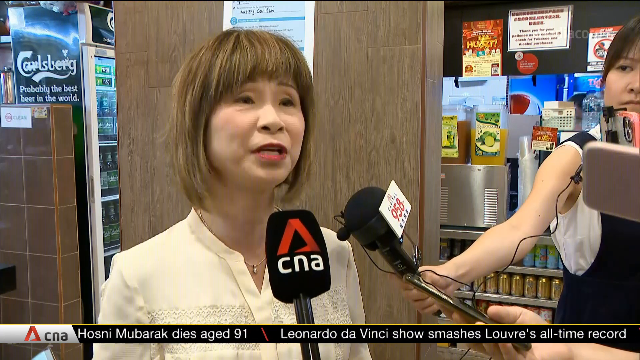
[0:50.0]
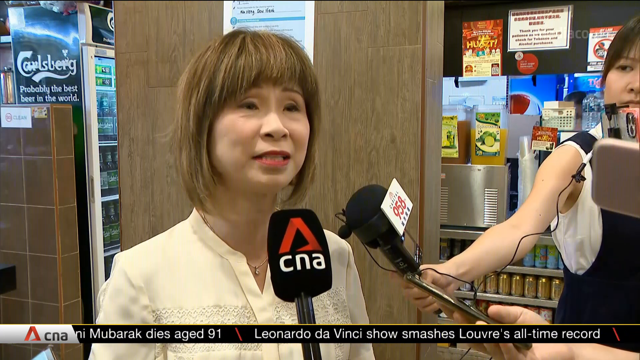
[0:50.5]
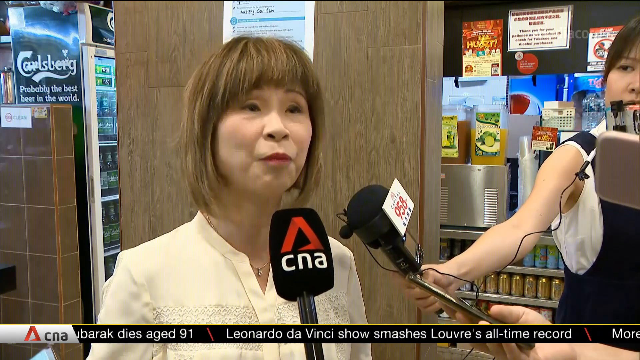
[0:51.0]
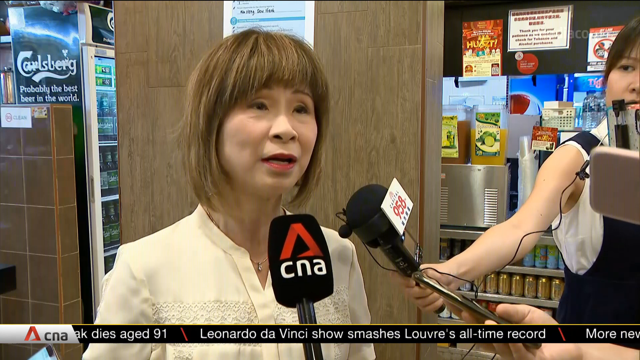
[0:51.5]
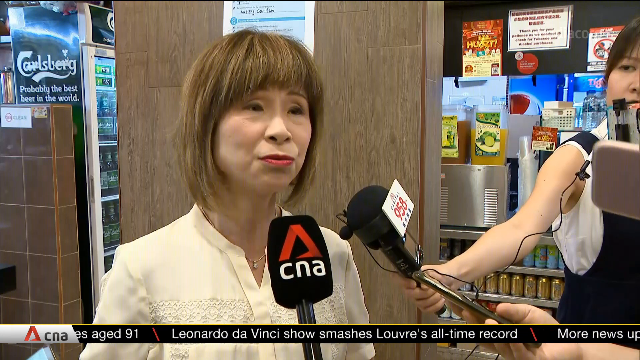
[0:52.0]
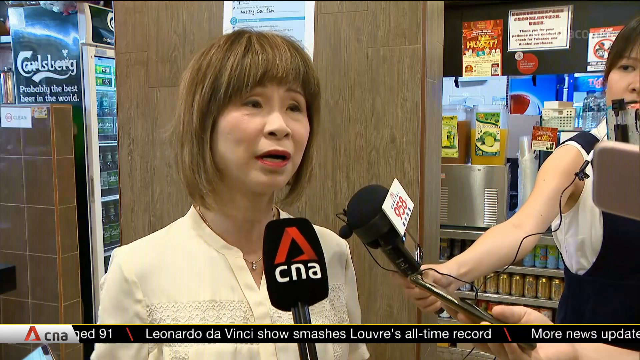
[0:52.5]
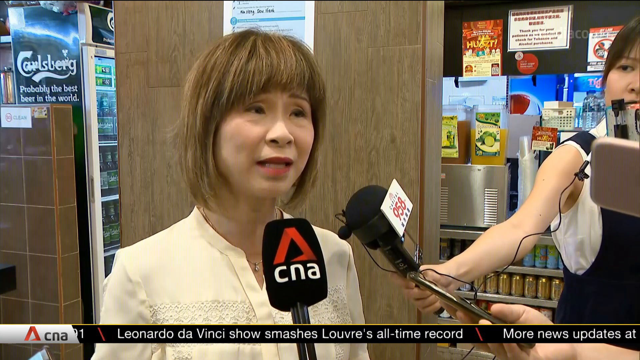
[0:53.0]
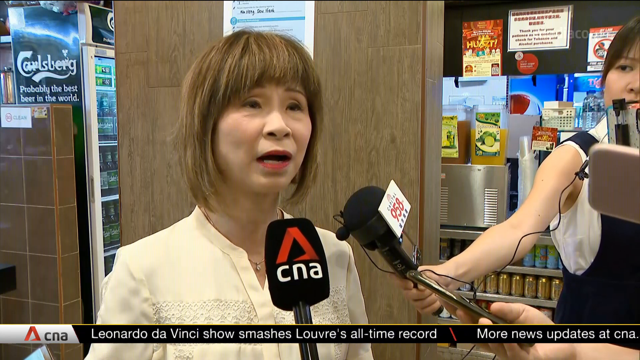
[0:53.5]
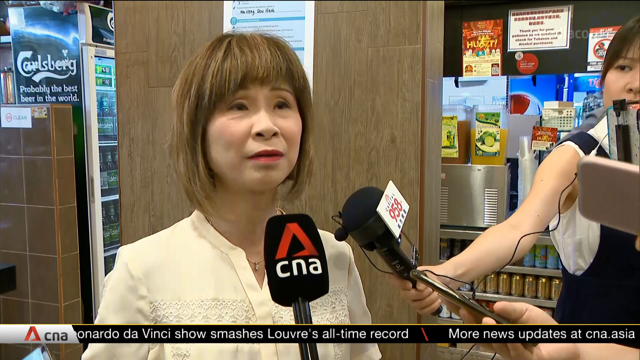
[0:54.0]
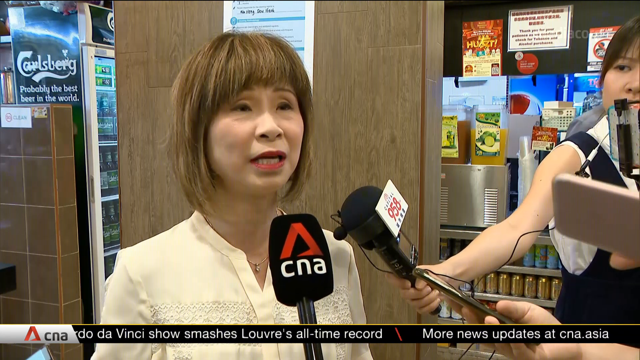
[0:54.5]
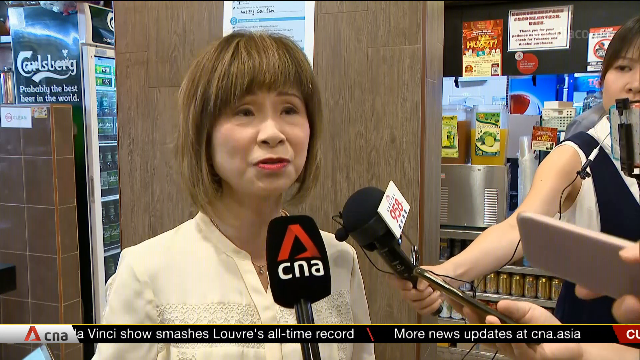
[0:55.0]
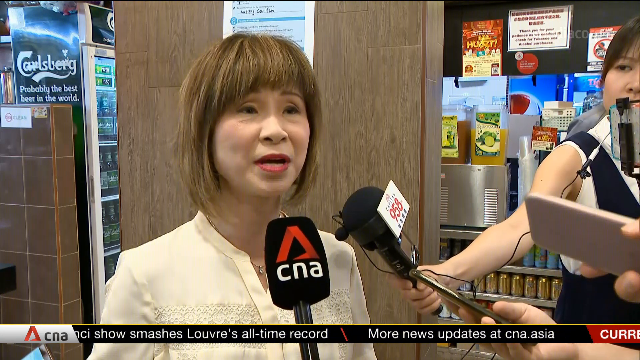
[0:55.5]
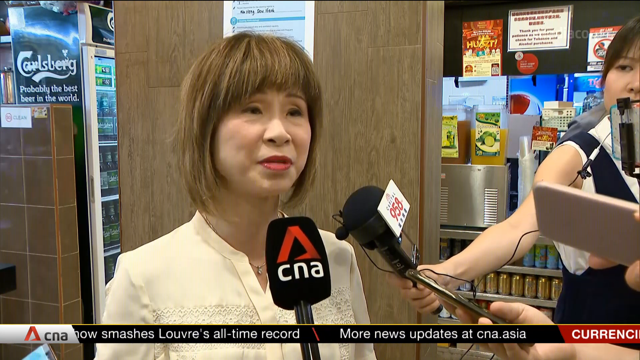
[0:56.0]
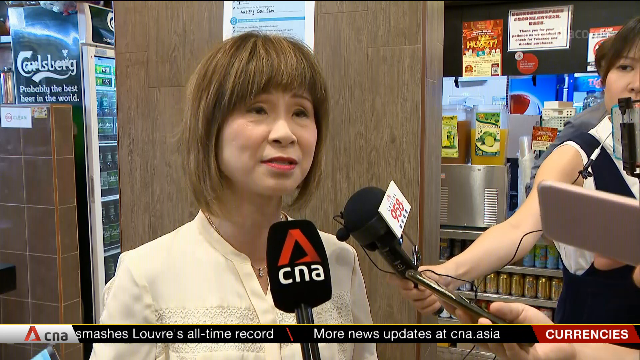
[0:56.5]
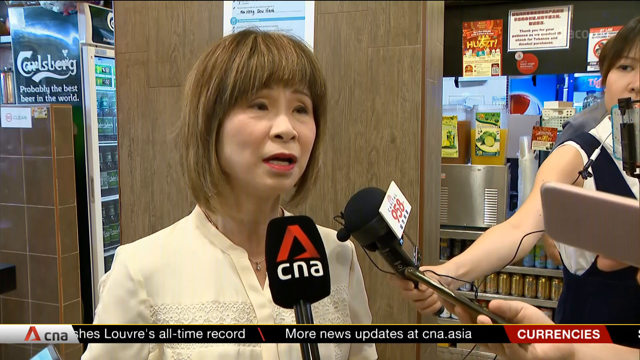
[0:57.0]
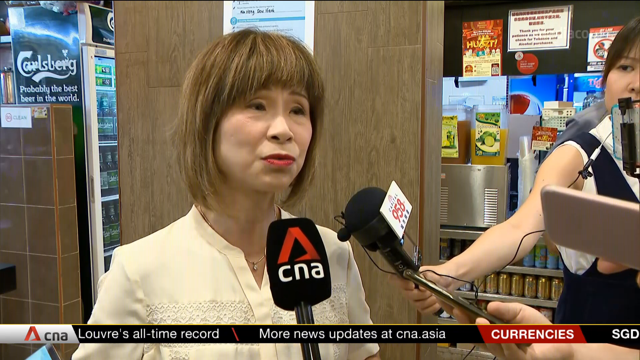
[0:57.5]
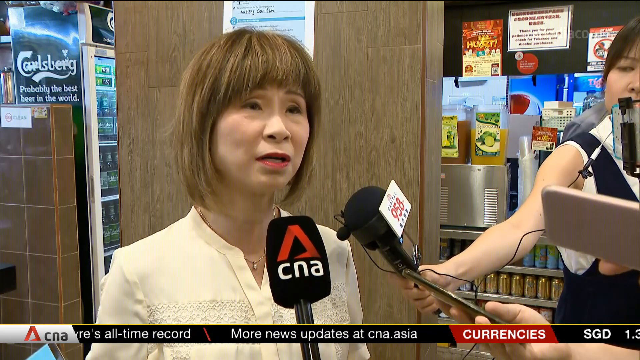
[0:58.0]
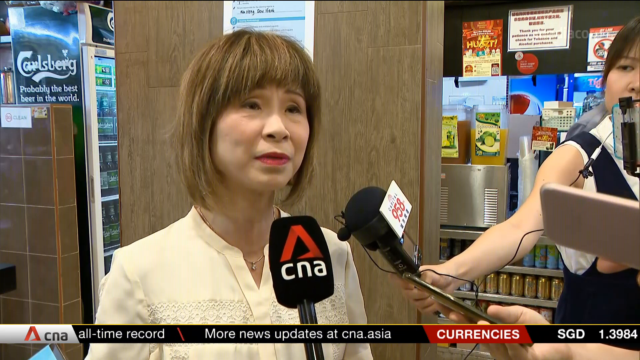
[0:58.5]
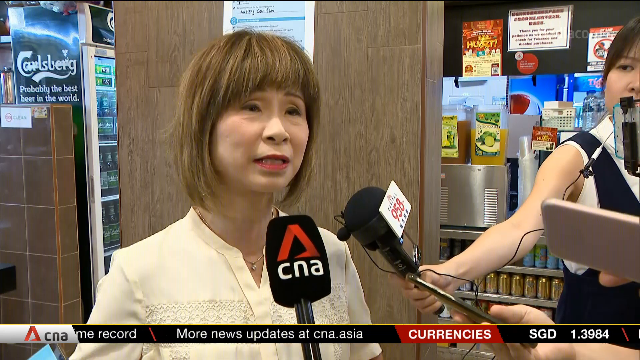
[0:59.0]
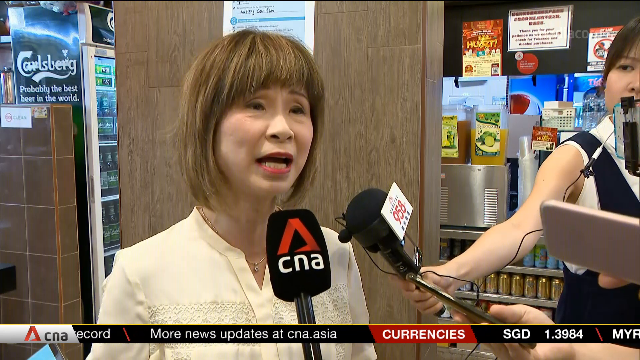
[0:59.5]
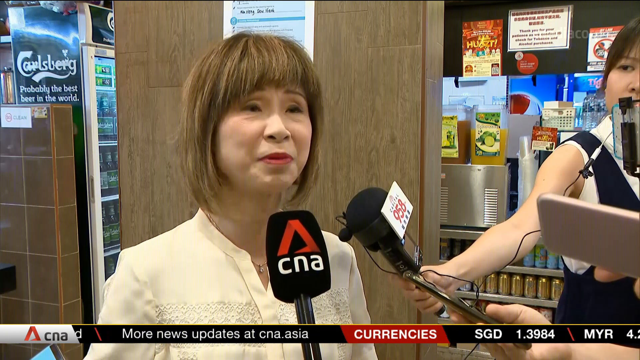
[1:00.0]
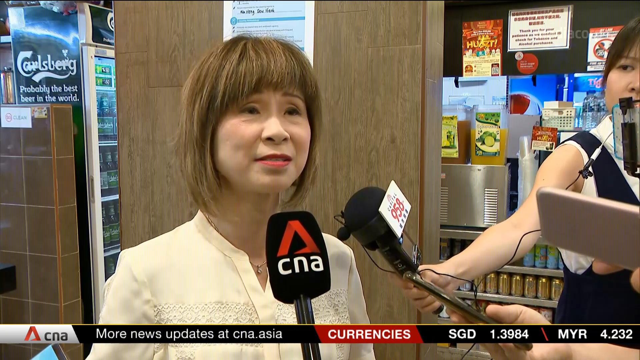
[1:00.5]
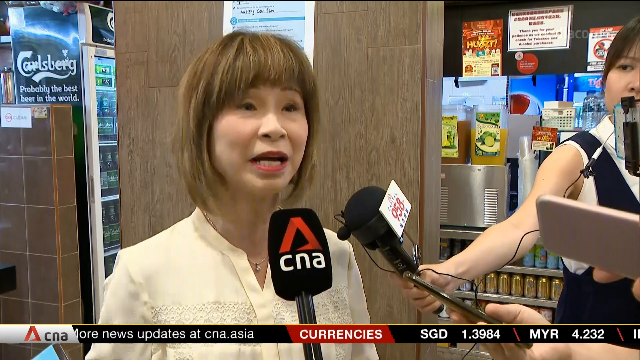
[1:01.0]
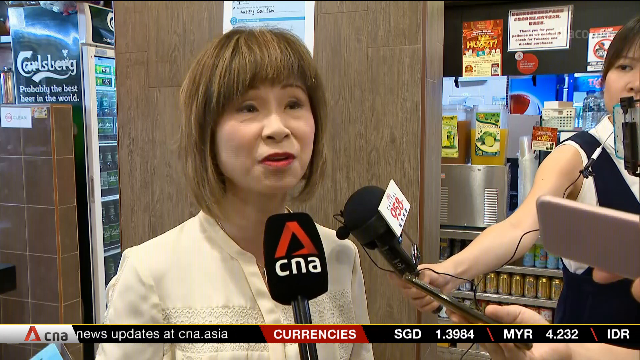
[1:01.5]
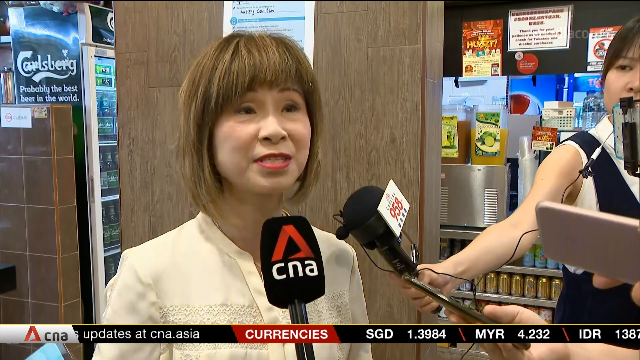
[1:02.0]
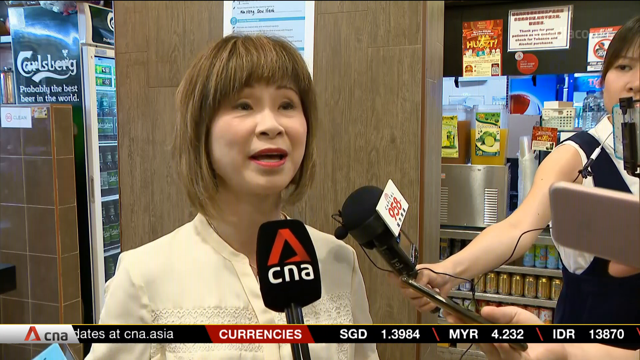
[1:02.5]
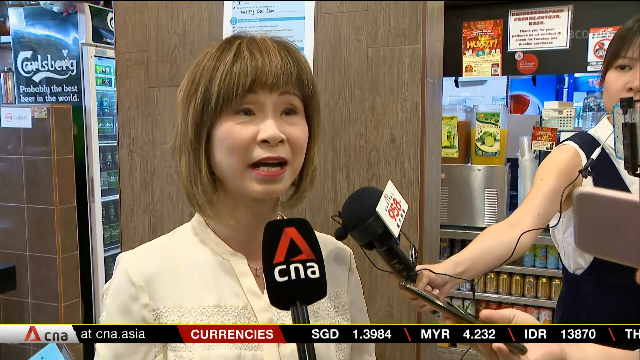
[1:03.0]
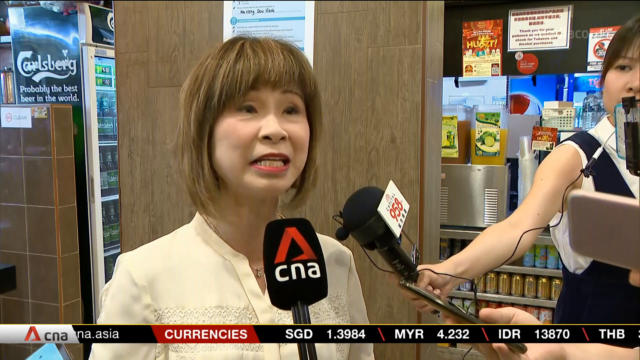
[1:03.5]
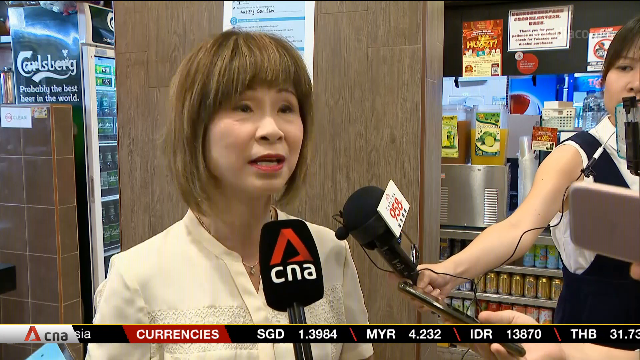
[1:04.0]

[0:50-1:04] The Asian woman in the cream-colored blouse is being interviewed. Two professional microphones are held up in front of her, one by a woman in a sleeveless outfit, and it looks like at least two people are holding up smartphones in front of her. As she talks, the nasolabial folds on her face are visible. She moves her head slightly as she speaks and looks very serious, and her arms move a little as she emphasizes words. She wears lipstick and has a bob haircut with thick bangs.